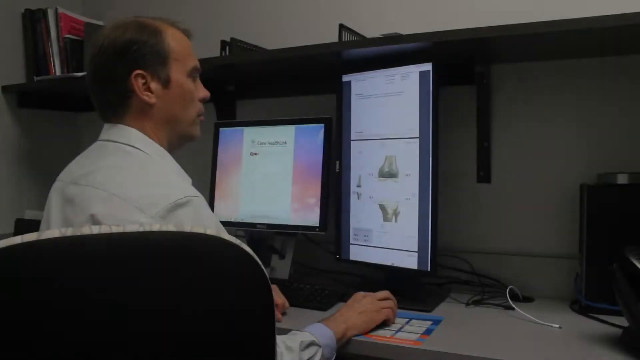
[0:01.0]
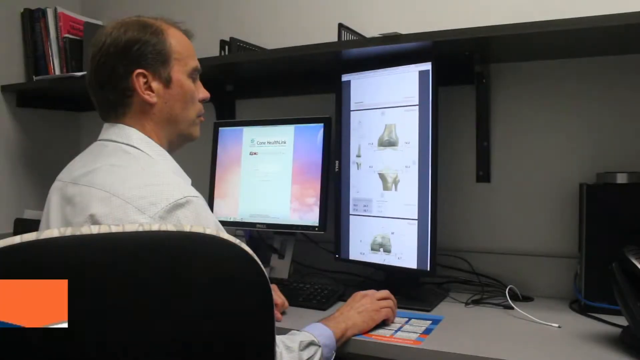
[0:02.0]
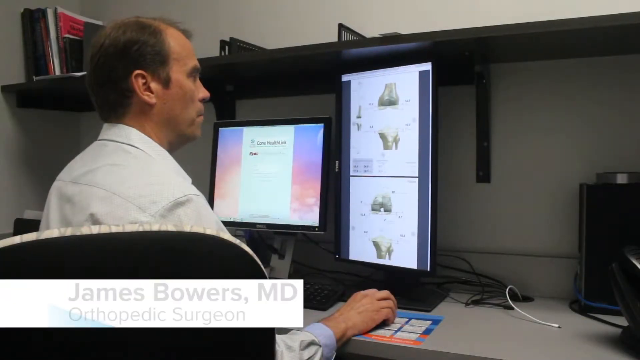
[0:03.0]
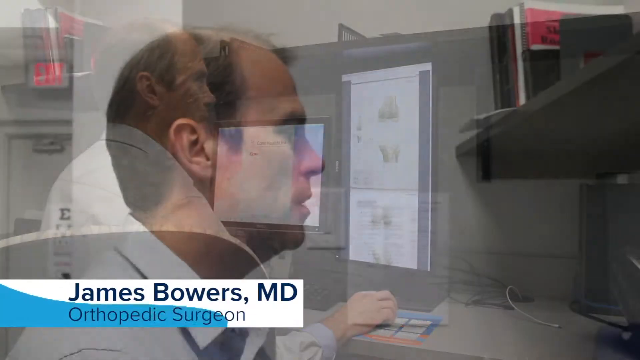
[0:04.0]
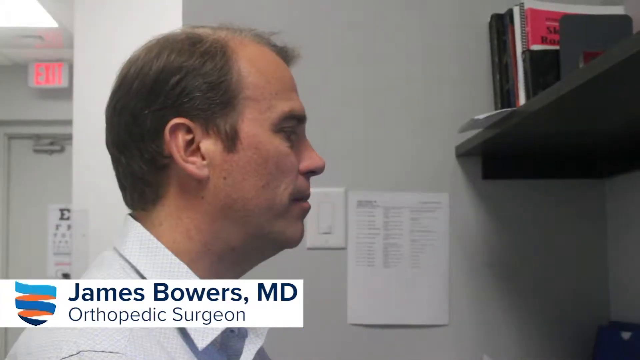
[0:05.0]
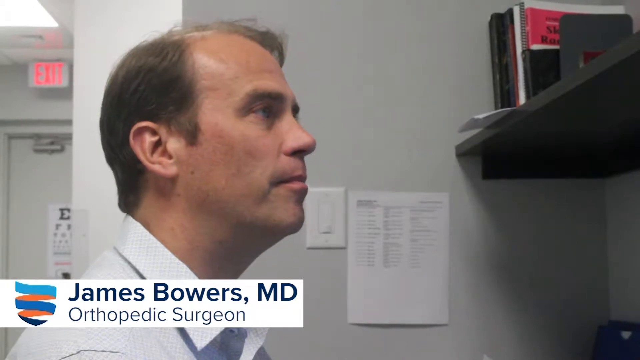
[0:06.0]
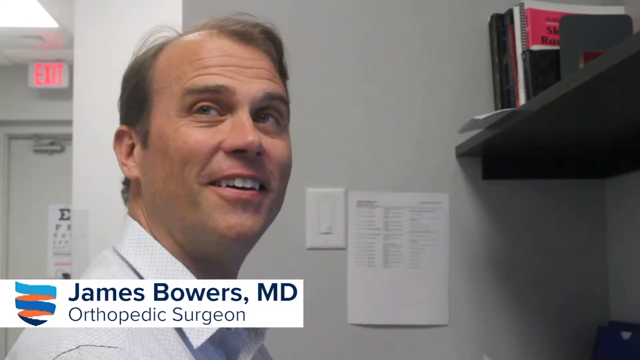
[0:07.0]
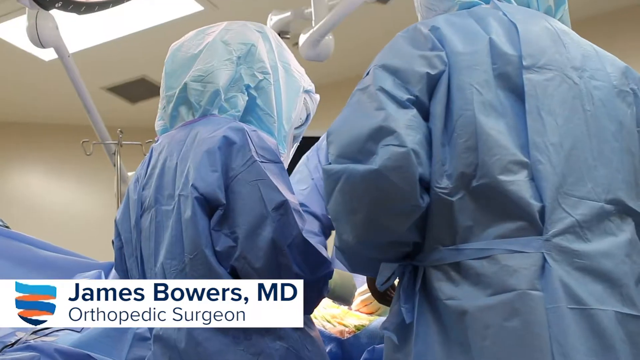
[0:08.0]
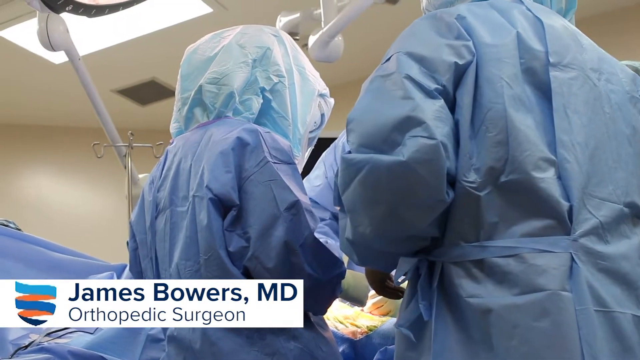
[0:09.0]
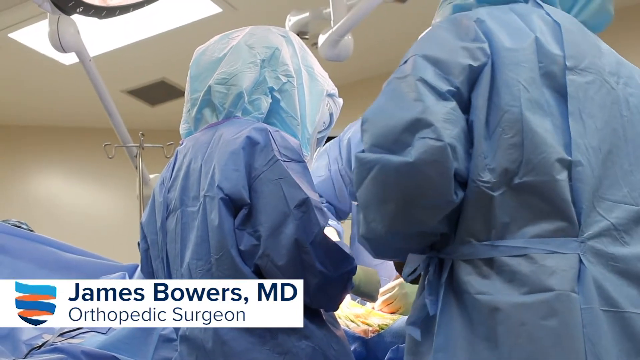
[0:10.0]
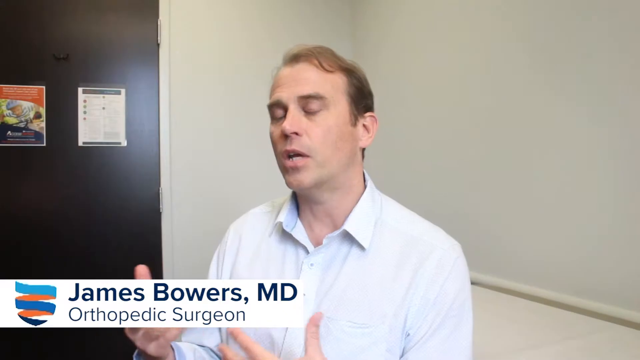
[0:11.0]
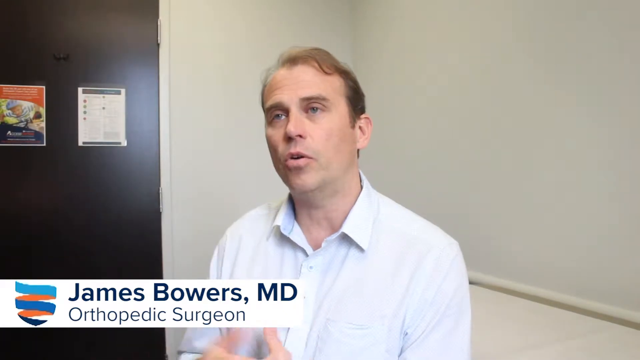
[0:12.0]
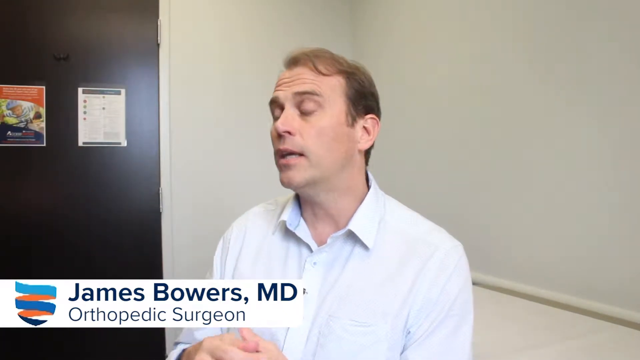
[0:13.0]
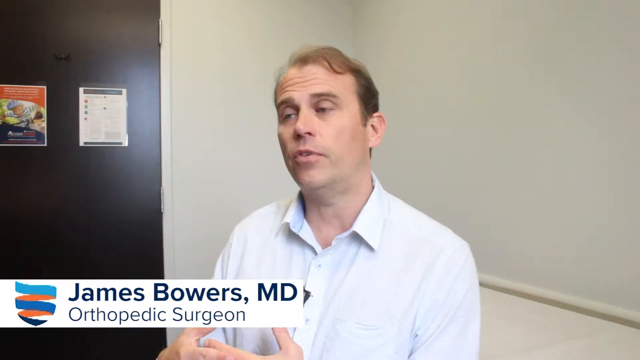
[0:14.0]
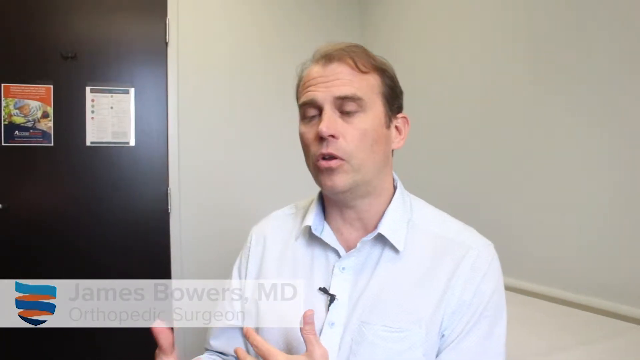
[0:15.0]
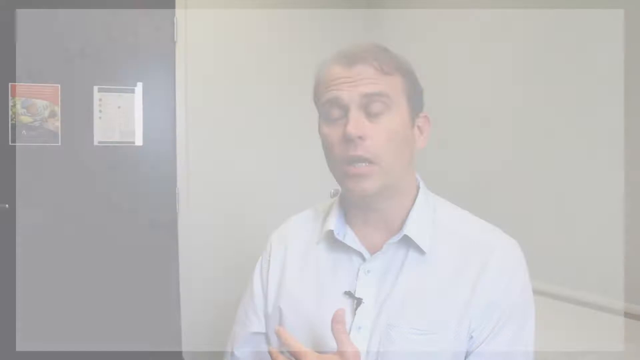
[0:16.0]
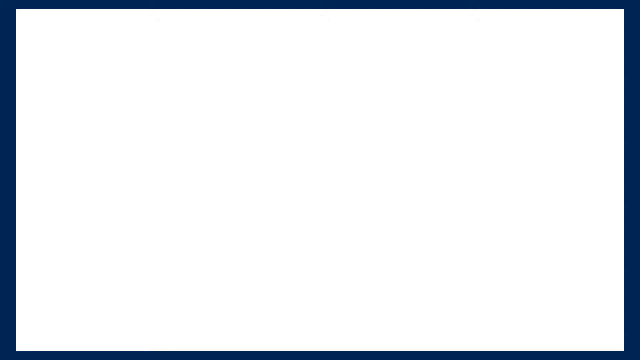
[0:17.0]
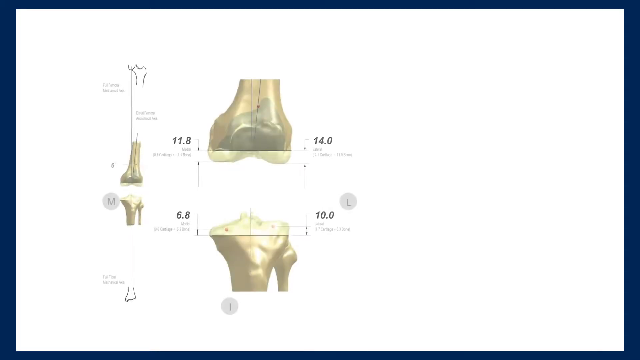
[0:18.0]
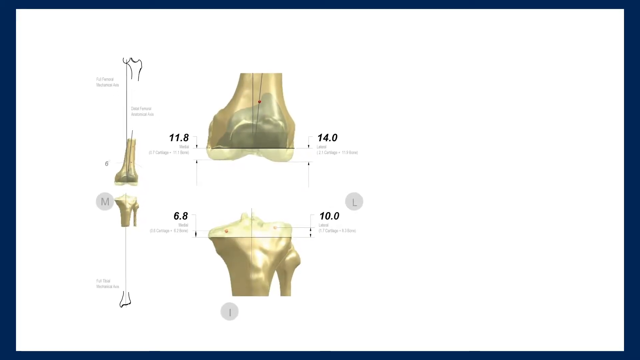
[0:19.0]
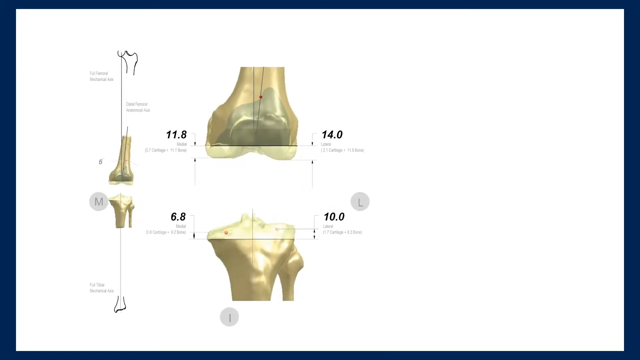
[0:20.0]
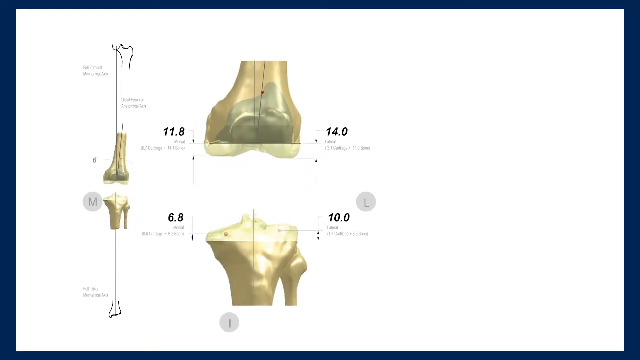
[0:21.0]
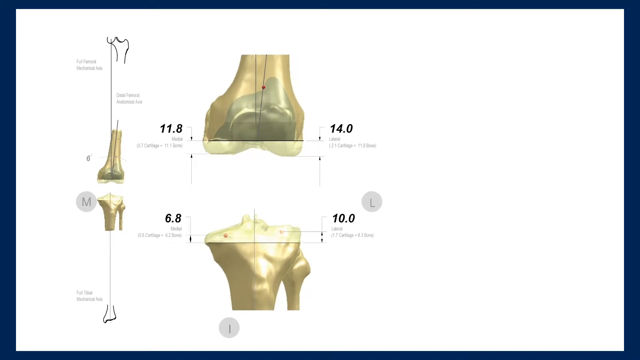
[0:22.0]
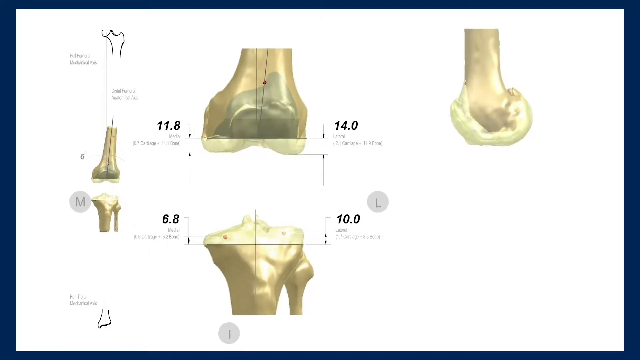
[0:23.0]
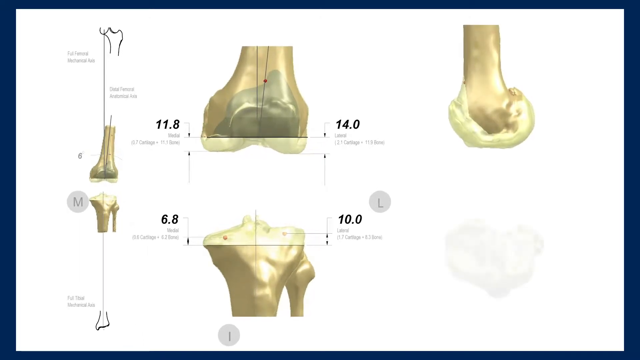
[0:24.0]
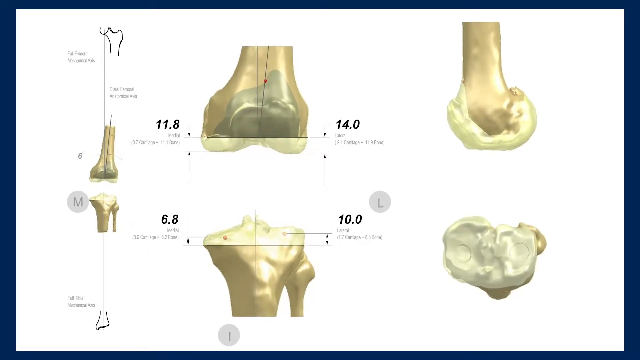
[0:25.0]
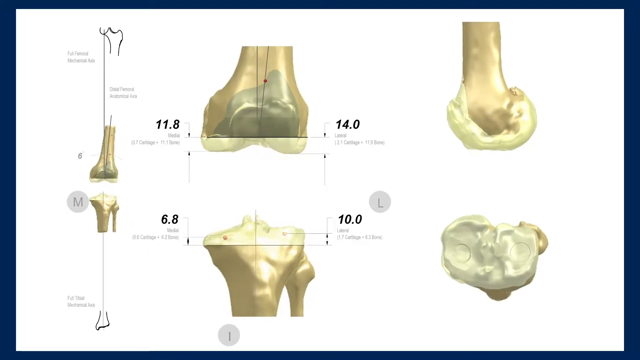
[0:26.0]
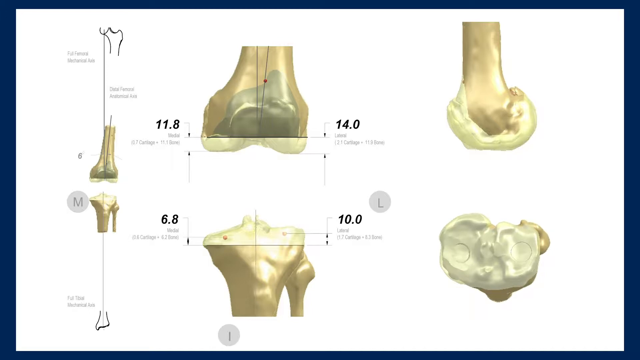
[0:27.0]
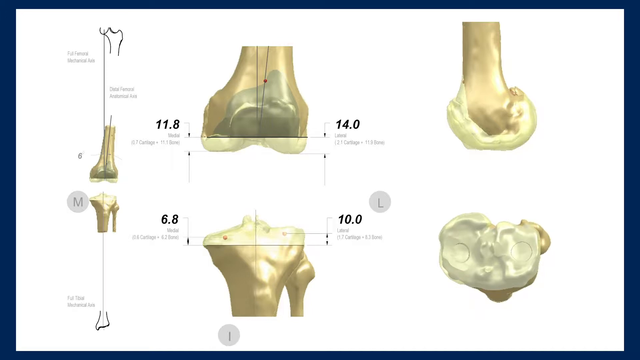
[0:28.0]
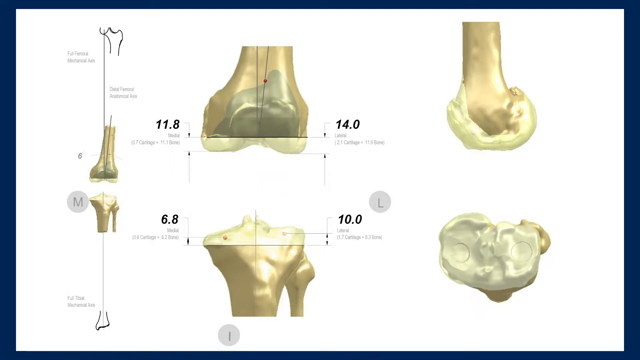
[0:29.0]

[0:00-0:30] A man sits in front of a desk on the left side of the frame, facing to the right. The back of his chair is visible, and he wears a white shirt. The knuckle of his left hand comes down across behind the chair, and his right hand is out on a mouse. He has short hair, a little balding on top, and is clean shaven. A big computer screen is right in front of his face, with a more rectangular one to the right of it, and he starts scrolling down that screen. In the bottom left corner, text appears: "James Bowers, MD, orthopedic surgeon." The shot fades to a side view of him talking. Behind him to the left is an exit sign above a door, half of which is visible. Toward the top on the right side there are books on a black shelf, and the wall is white. He looks and talks, barely moving, then looks up to the right, looks toward the camera and smiles big. The video cuts inside a hospital room, where two people in blue hospital gear stand with their backs to the camera. It then cuts to him in front of a white wall with a black door on the left side; he wears a white polo shirt. He looks up to the left, off to the left and down, his hands in front of him with thumbs up, and the thumbs move as he talks. Next comes a diagram of bones and joints that slowly zooms in; another appears in the top right and then one in the bottom right, apparently showing a hip joint.